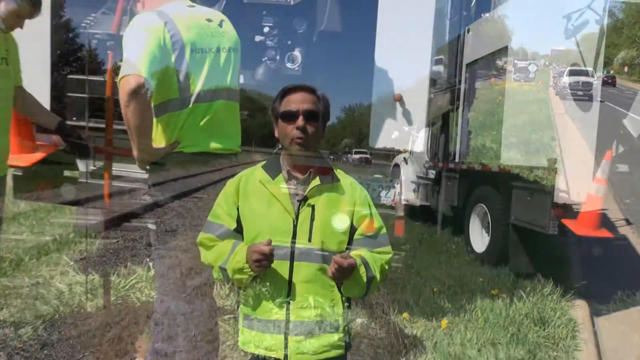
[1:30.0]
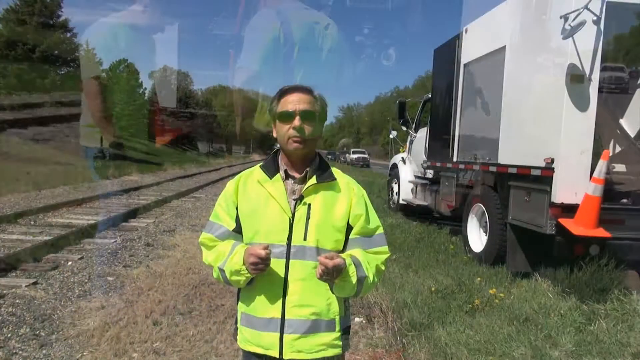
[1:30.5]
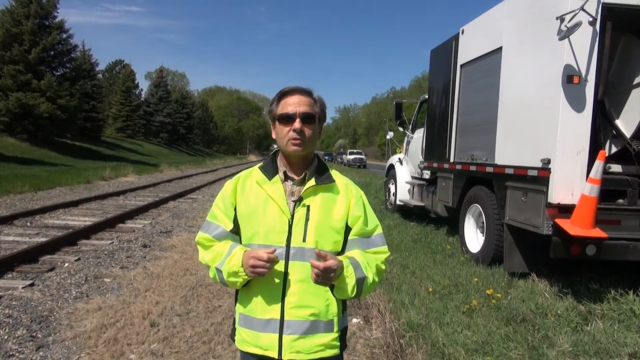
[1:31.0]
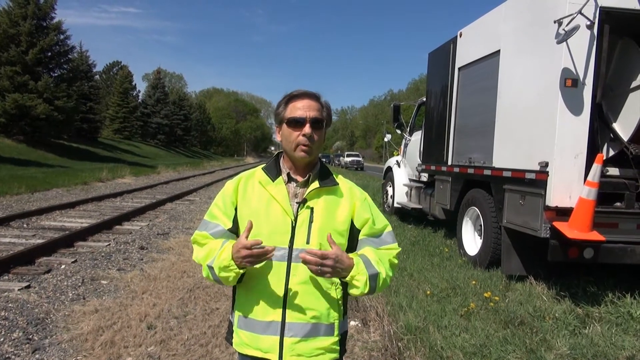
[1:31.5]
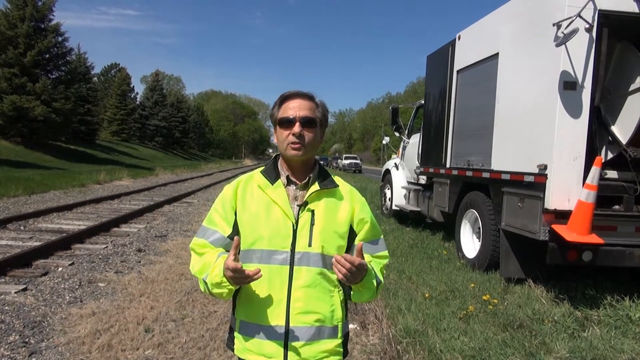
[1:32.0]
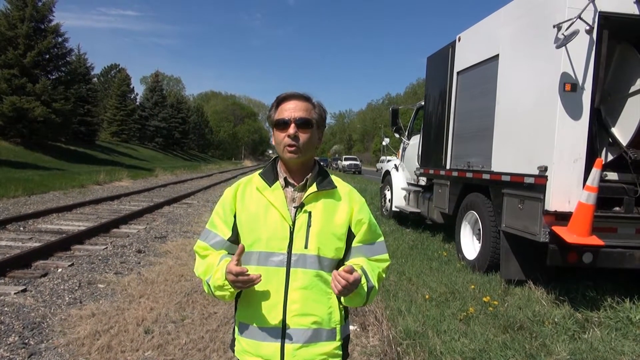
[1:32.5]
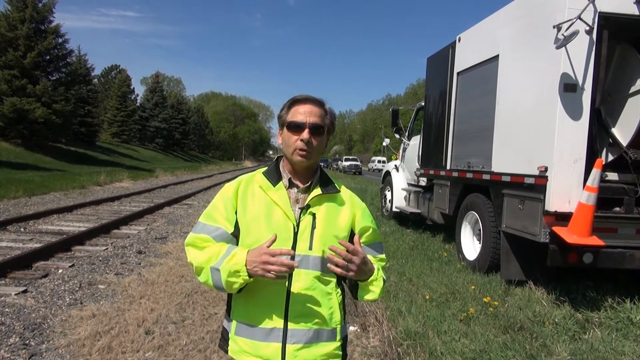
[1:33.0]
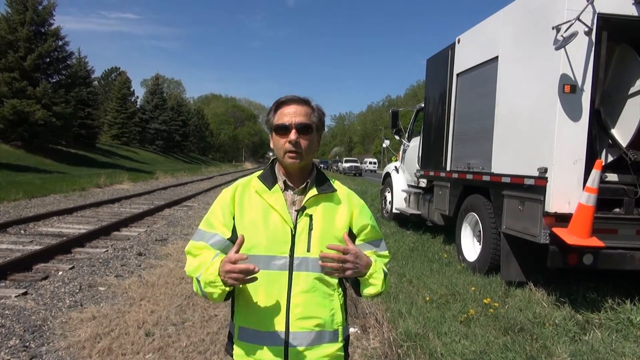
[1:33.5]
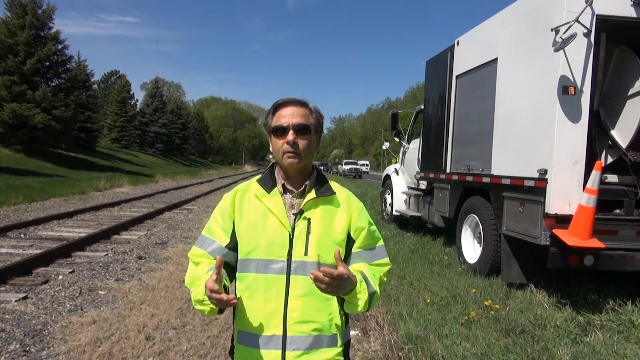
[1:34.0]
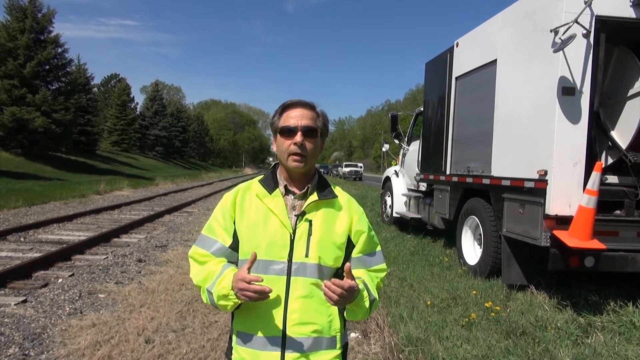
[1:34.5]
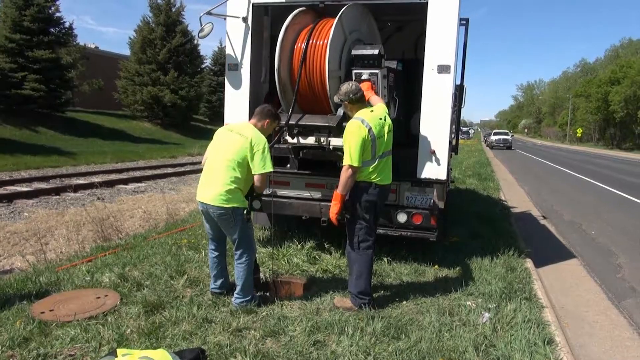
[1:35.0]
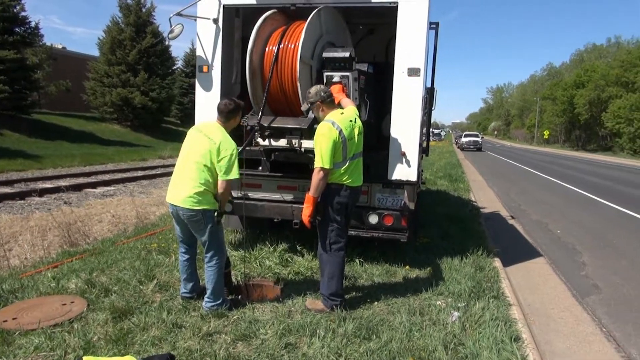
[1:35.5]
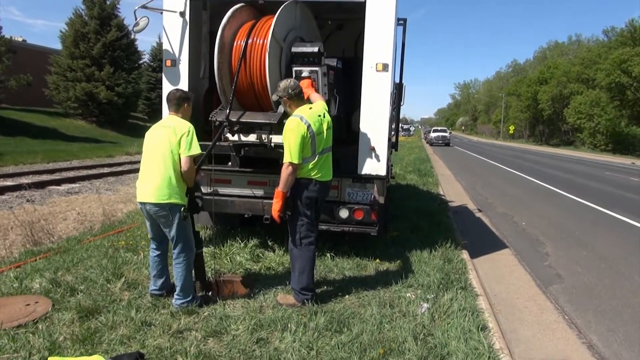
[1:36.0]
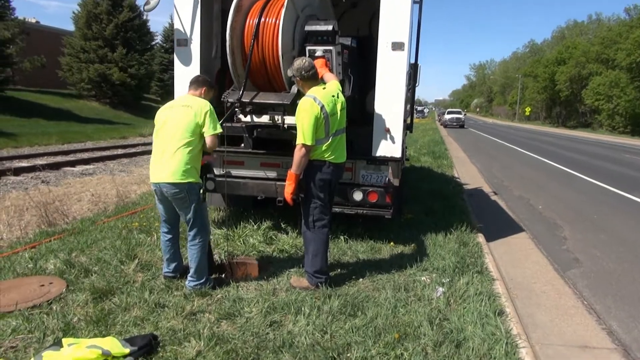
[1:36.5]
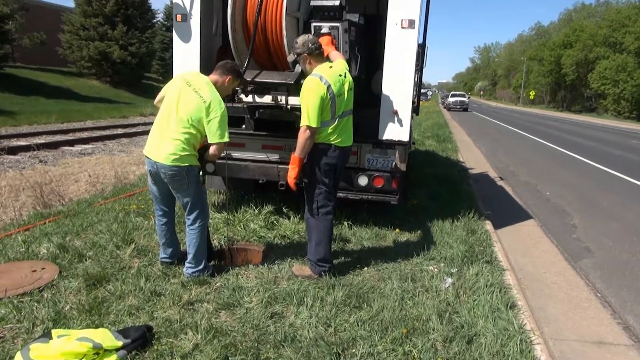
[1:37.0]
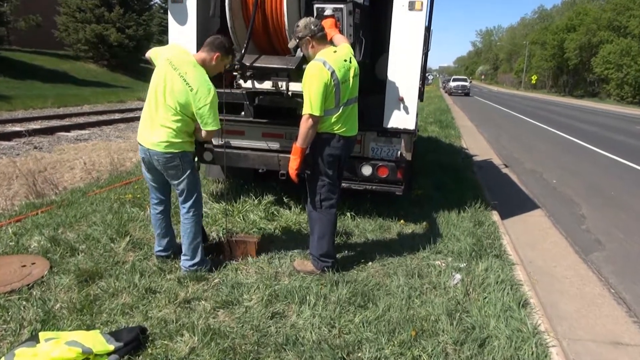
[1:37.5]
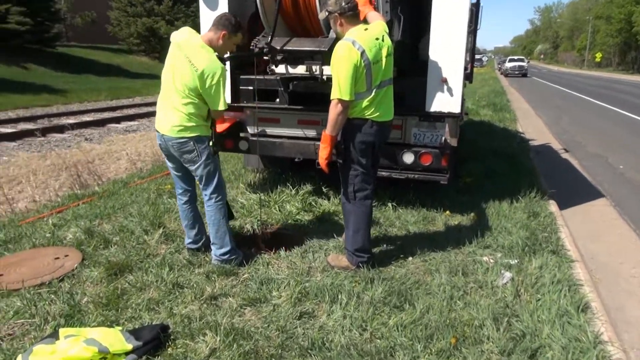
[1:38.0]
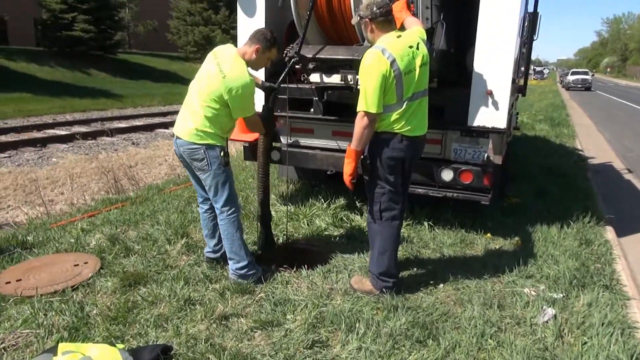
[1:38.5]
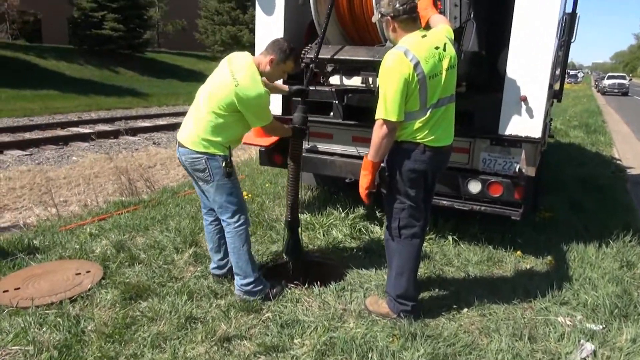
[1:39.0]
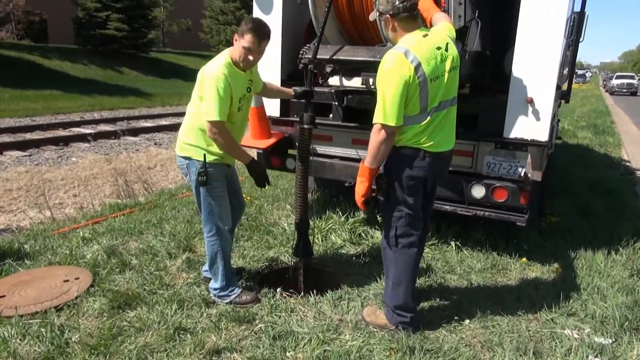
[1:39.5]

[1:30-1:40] Mr. Tracy is back, talking to the camera along the railroad tracks, with a white truck with flashing lights, a construction cone, trees all over the place and blue skies. He wears a neon green smock or jacket and sunglasses, and a van drives by down the road. The video then returns to the back of a truck, where two people in neon green are with an orange spool of something on the left side of the road. Something is being pumped or sucked into the sewer, possibly a cleaning agent going into it.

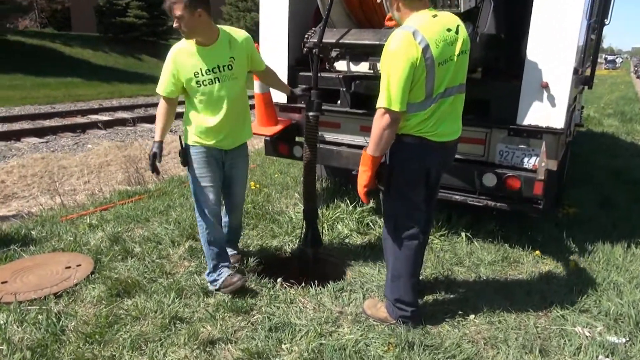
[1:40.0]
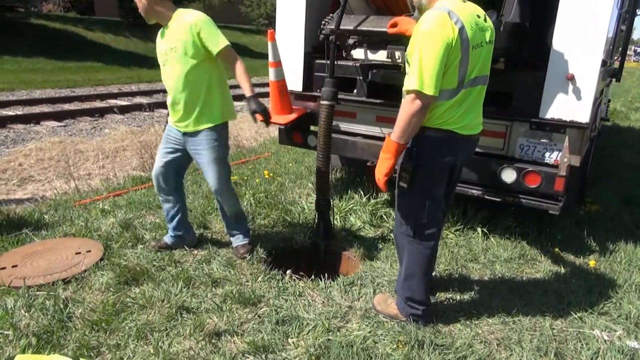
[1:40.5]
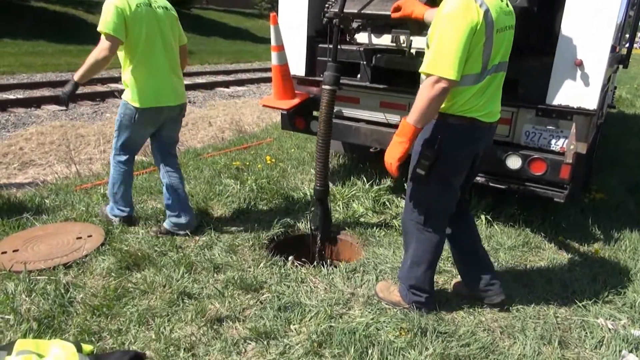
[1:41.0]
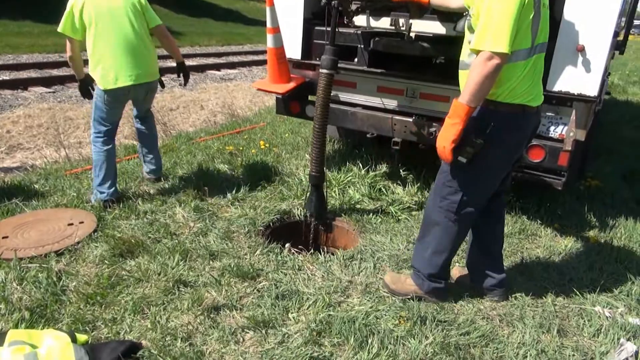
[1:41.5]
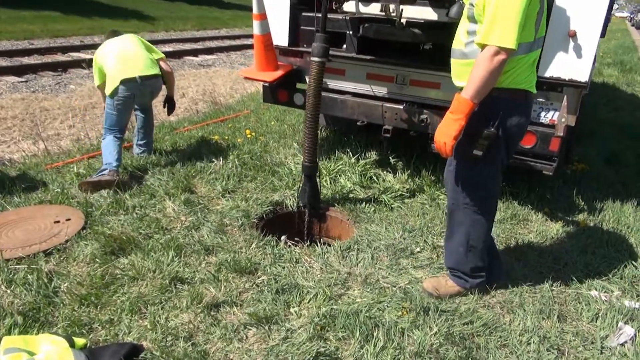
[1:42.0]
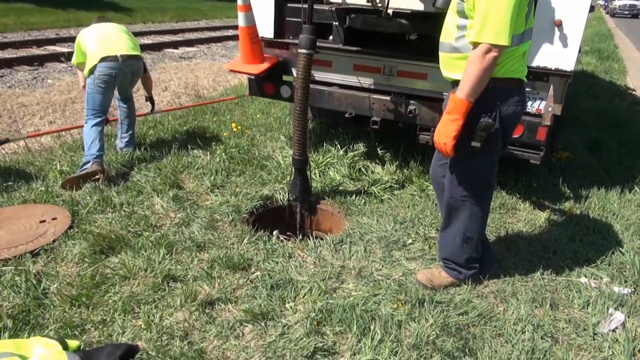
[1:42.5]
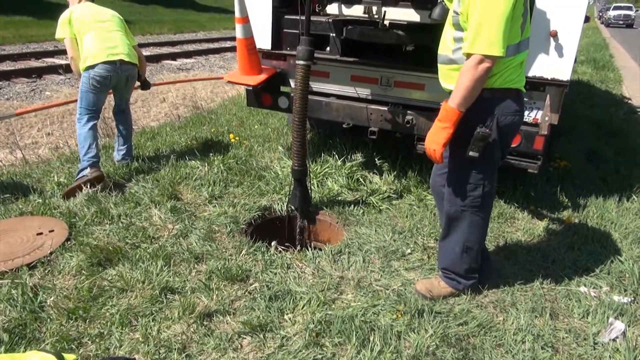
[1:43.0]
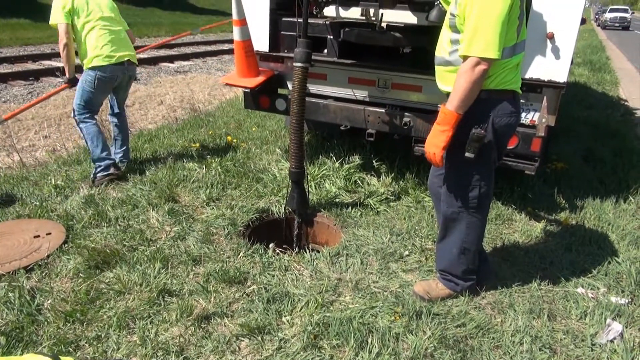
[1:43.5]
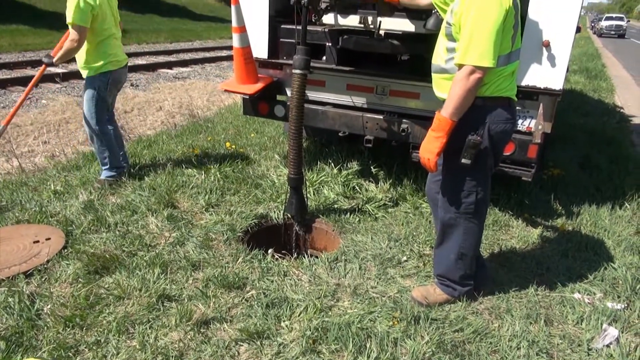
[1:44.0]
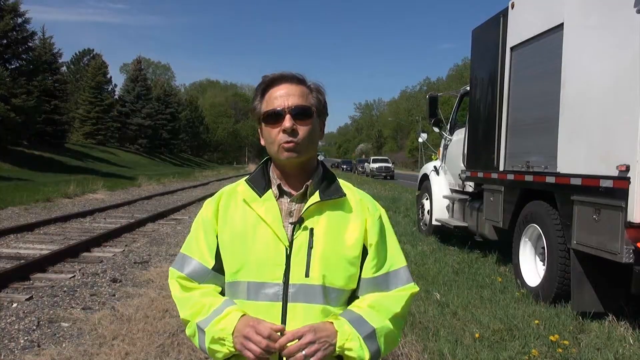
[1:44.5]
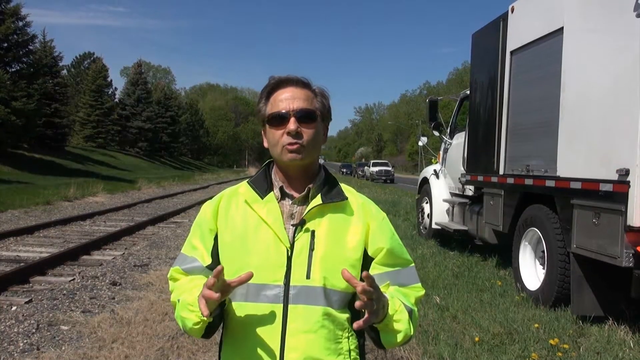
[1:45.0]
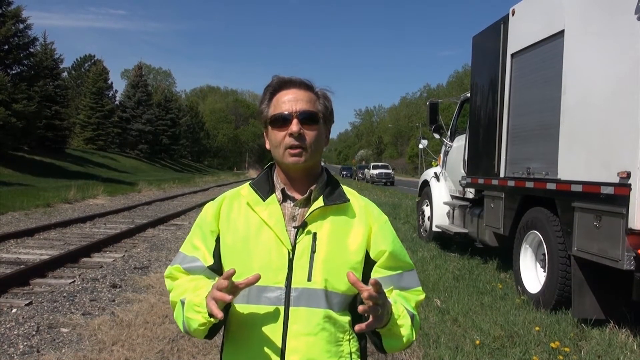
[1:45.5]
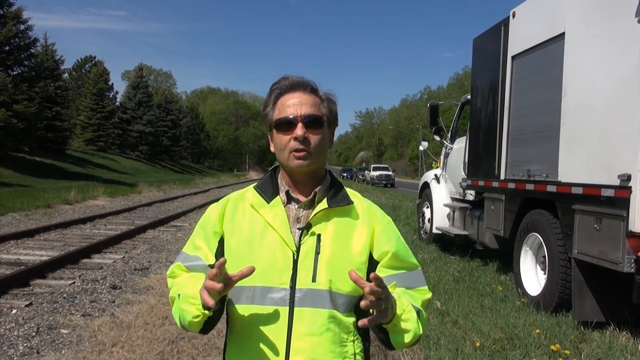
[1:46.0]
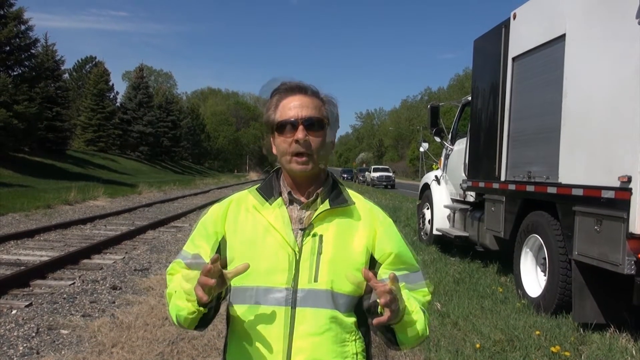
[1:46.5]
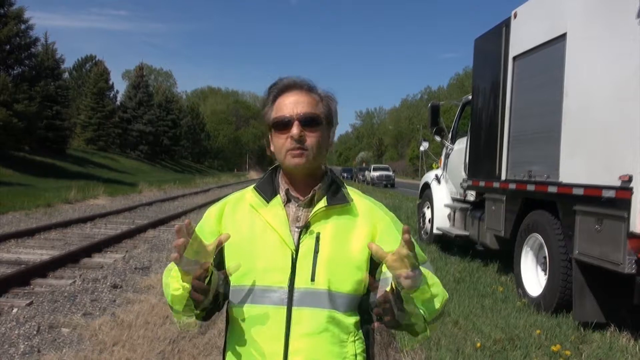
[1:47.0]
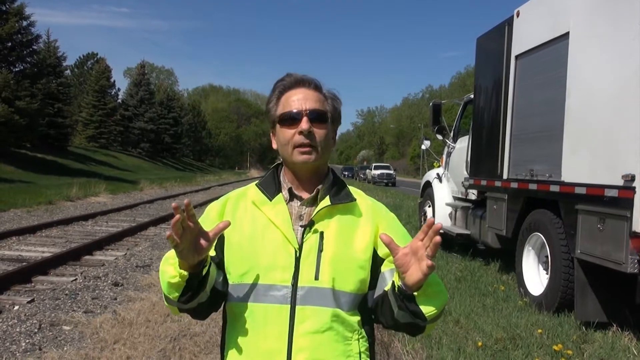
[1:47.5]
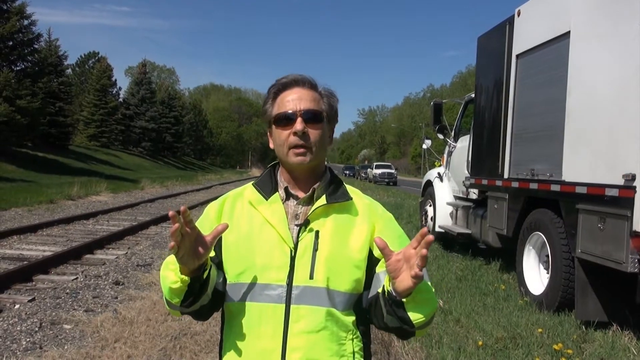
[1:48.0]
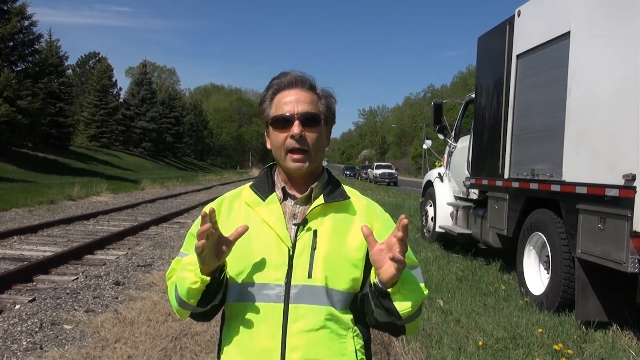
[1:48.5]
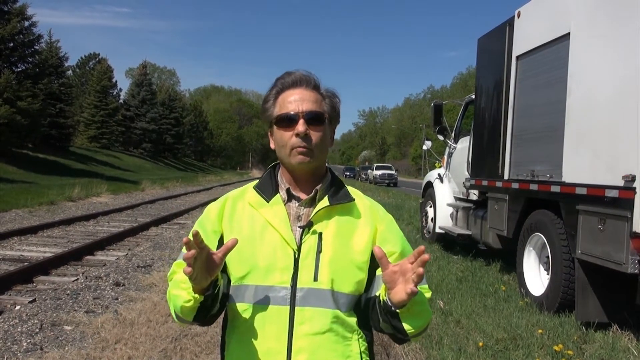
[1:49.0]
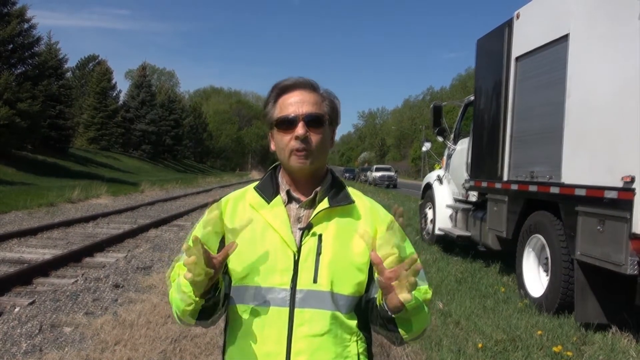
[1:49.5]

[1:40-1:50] The two workers are at the sewer line, apparently either cleaning it, sucking something up, or spraying something in. The grass needs mowing. One of them grabs an orange bowl. The video cuts back to Mr. Tracy in sunglasses talking to the camera, then back to the two workers. It is a bright, sunny day with clear skies. Railroad tracks are on the left with no train coming, and a bunch of trees are around as the workers do what looks like cleaning or fixing.